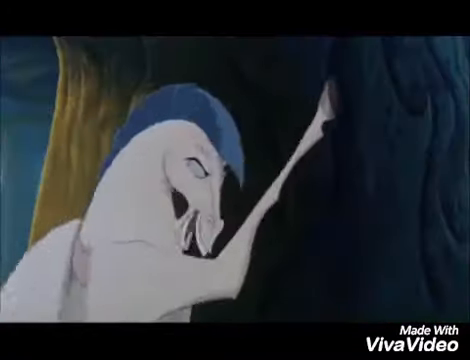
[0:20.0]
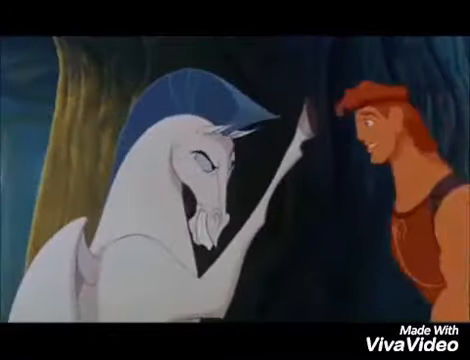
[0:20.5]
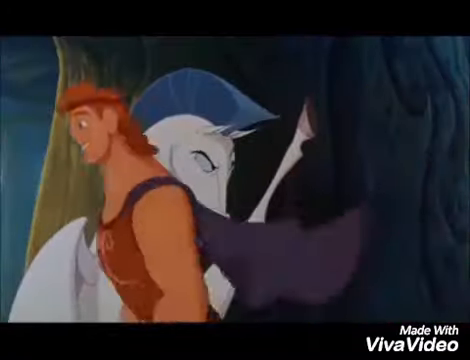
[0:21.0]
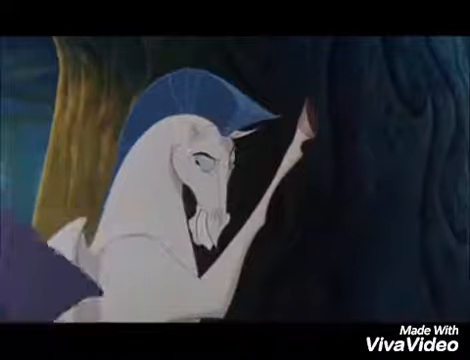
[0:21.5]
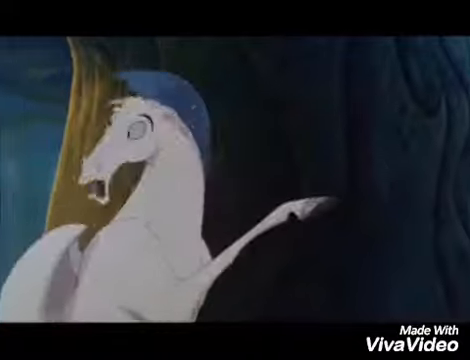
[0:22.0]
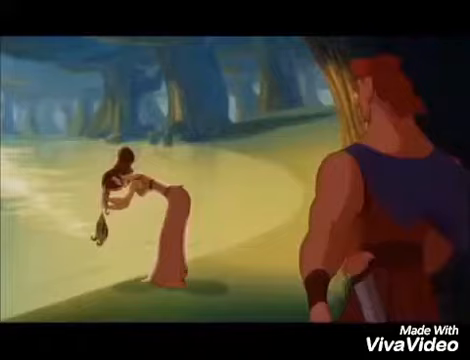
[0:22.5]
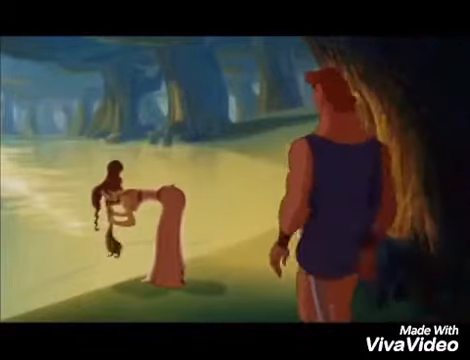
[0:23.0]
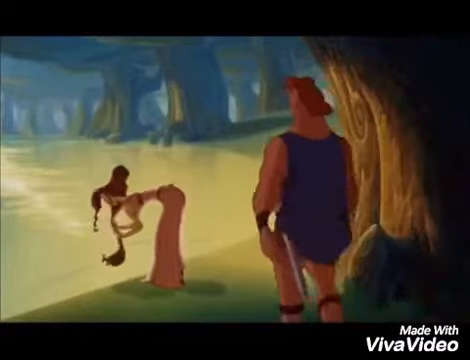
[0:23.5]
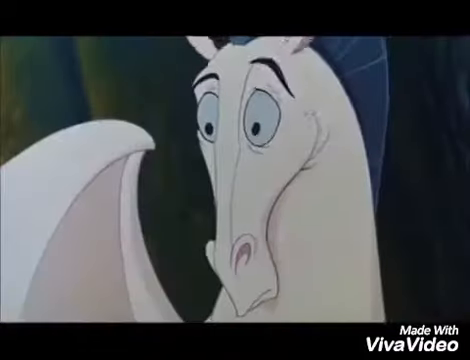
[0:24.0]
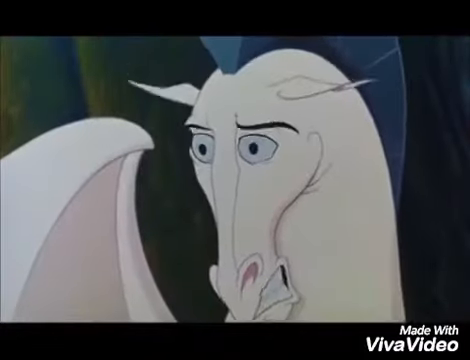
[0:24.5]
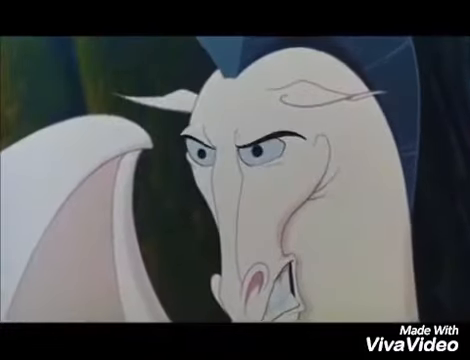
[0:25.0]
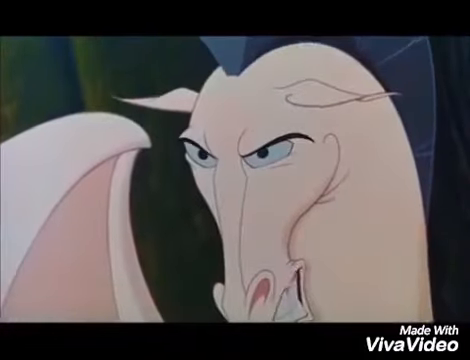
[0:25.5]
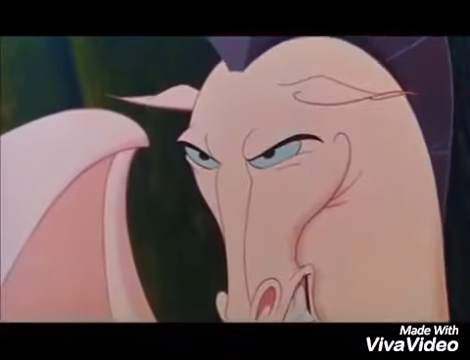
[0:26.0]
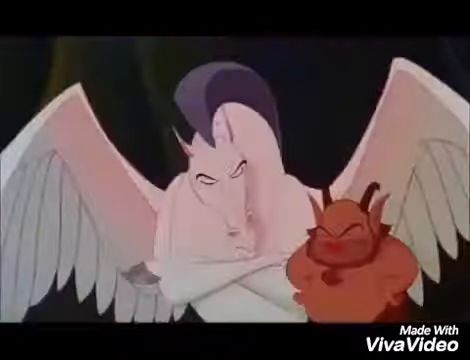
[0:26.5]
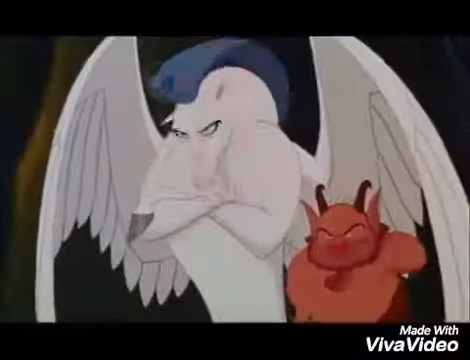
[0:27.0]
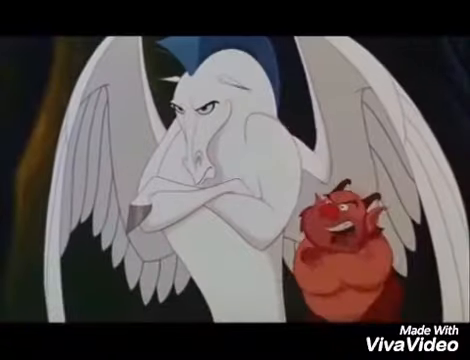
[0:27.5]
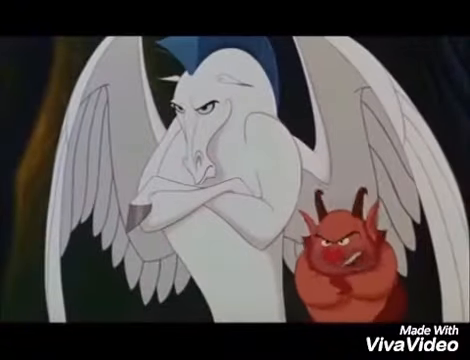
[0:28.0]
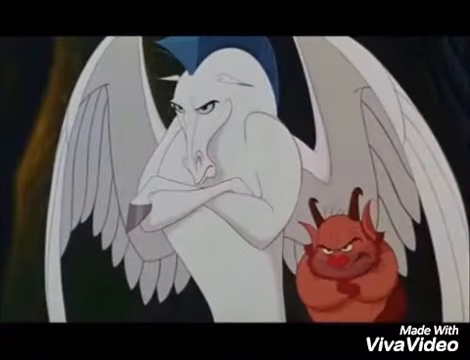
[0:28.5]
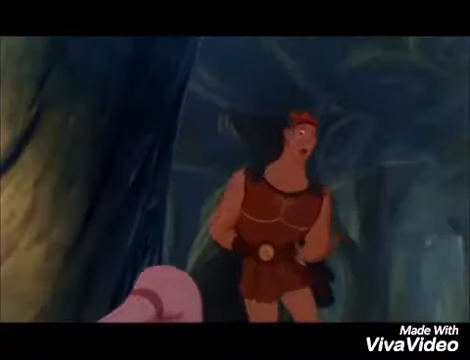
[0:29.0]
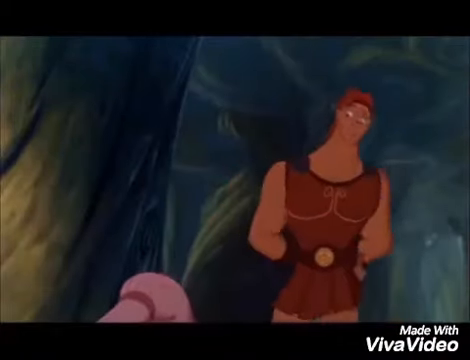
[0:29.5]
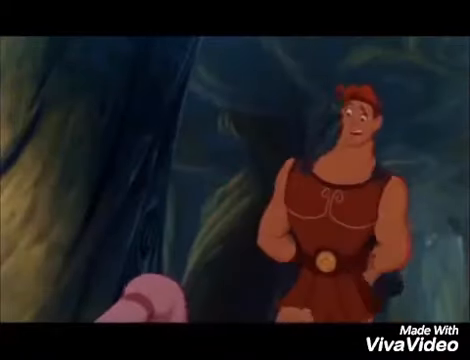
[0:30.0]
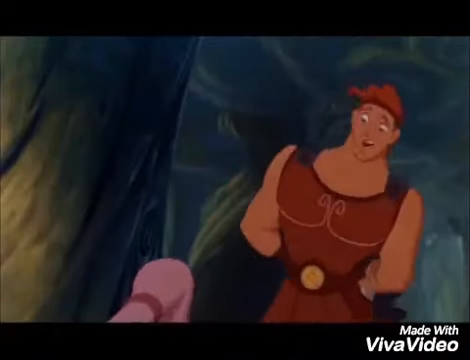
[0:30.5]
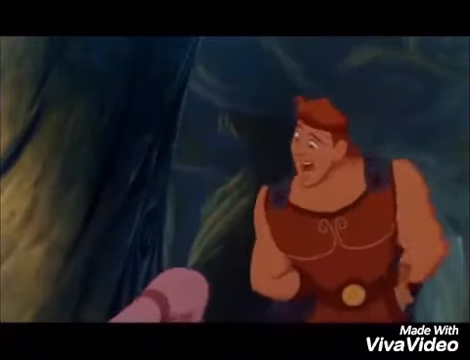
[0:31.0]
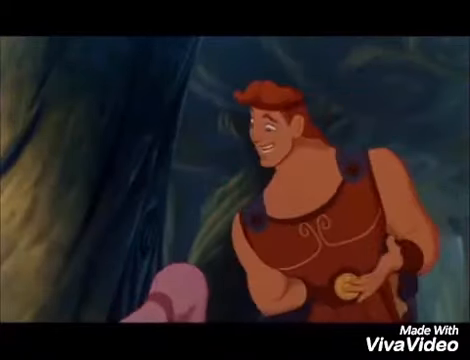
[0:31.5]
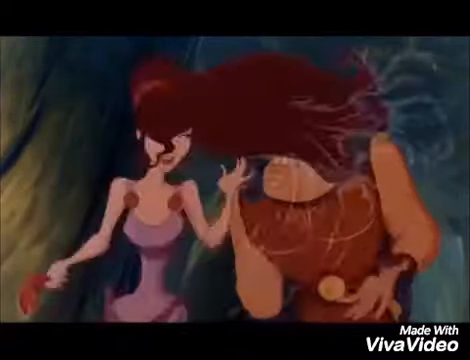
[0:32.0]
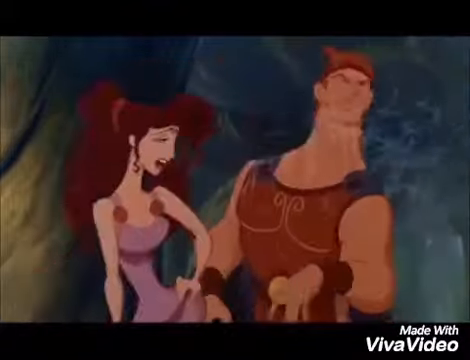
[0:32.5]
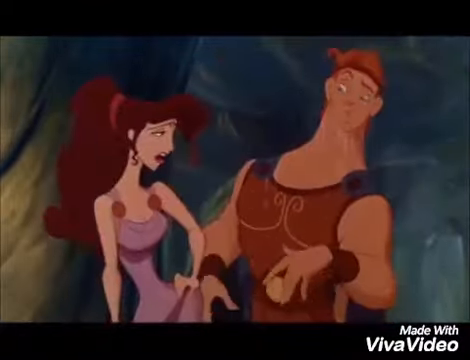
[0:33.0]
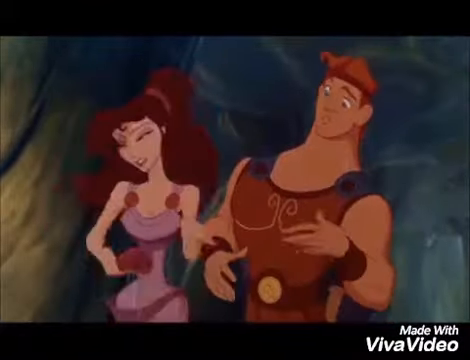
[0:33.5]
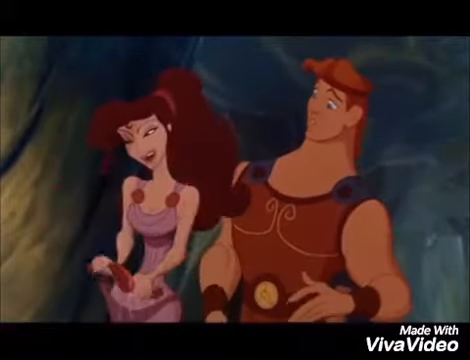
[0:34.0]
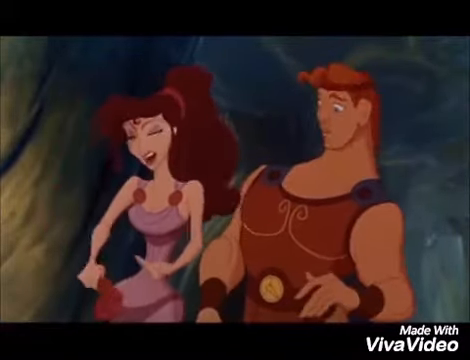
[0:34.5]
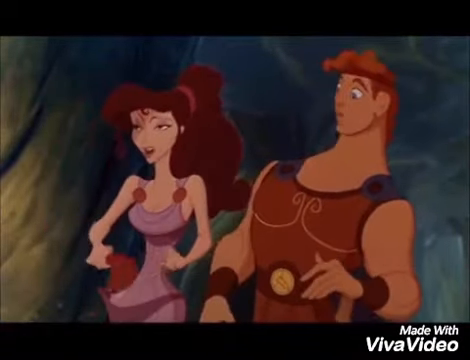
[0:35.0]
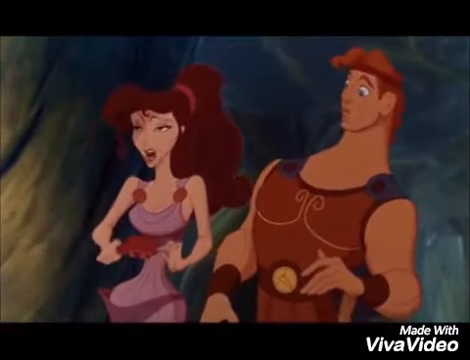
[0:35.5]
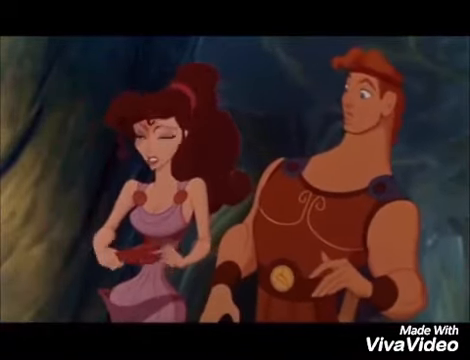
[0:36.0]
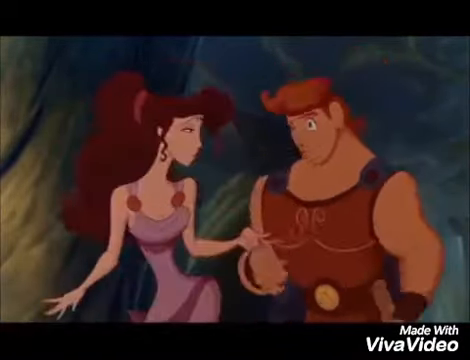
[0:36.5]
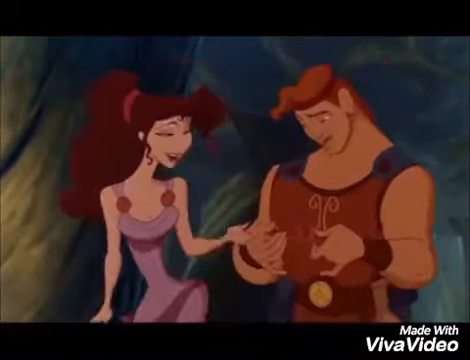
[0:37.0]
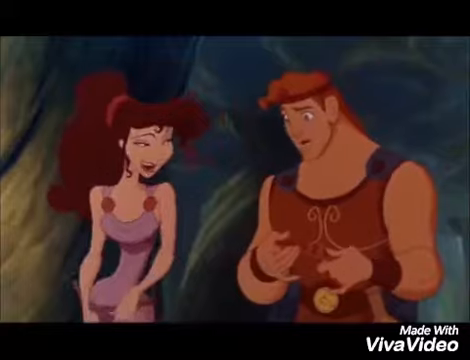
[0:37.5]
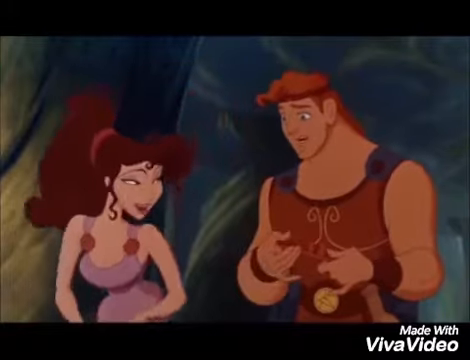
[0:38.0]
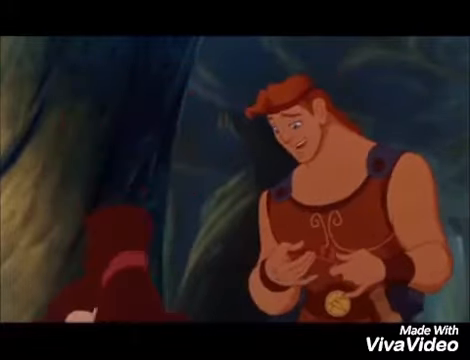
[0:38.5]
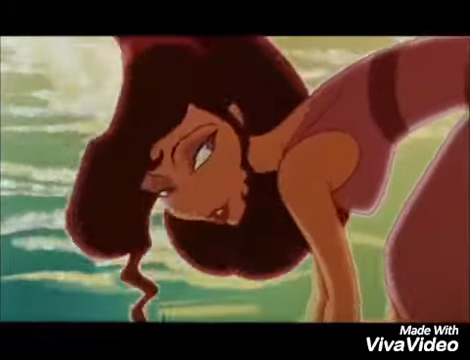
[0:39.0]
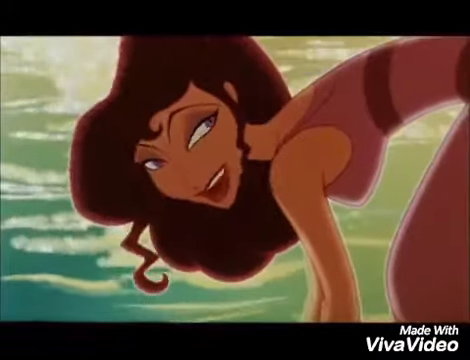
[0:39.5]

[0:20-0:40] The guy with the dark brown skin complexion approaches the beautiful lady. The horse reacts with something like shock, which turns to anger, and its color changes from white to brown. The horse has a mohawk hairstyle on its head and wings, and wears a very furious expression. The little creature is right beside the horse, and they both stand there looking on, kind of furious, as the guy approaches the girl. The guy talks to the girl; she stands up from bending down and hits him with her wet hair from washing it. They have a conversation, and something is handed over to the guy.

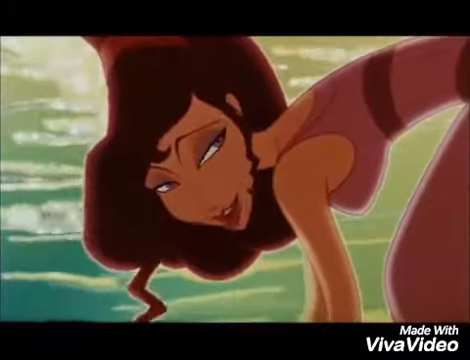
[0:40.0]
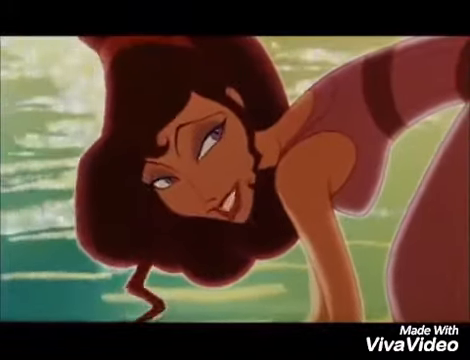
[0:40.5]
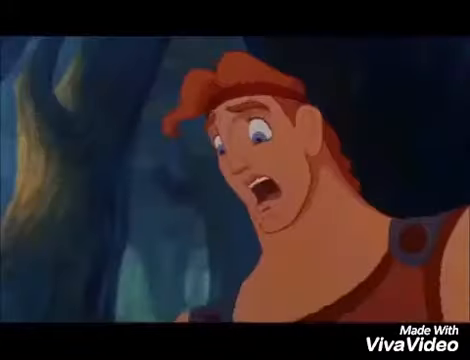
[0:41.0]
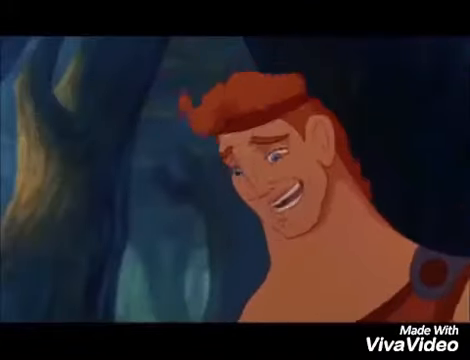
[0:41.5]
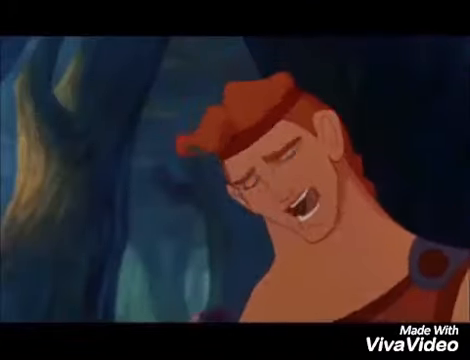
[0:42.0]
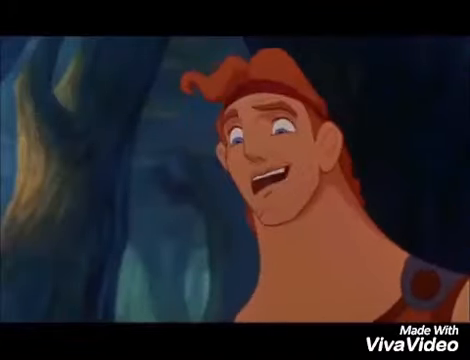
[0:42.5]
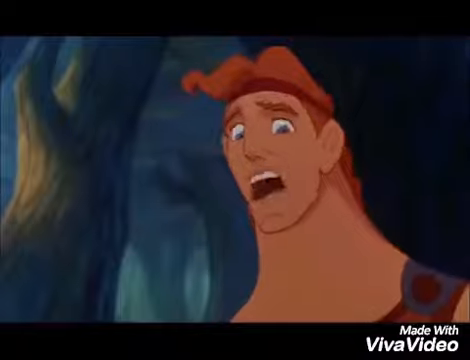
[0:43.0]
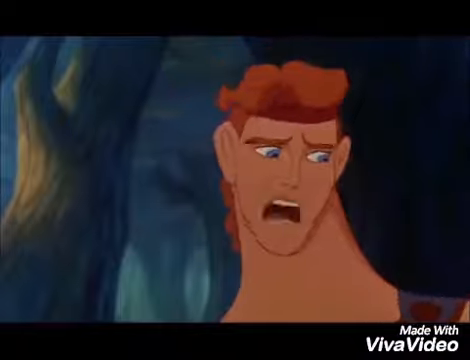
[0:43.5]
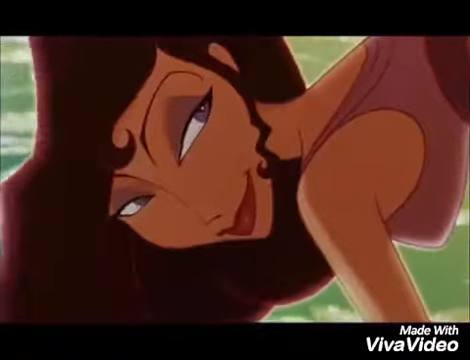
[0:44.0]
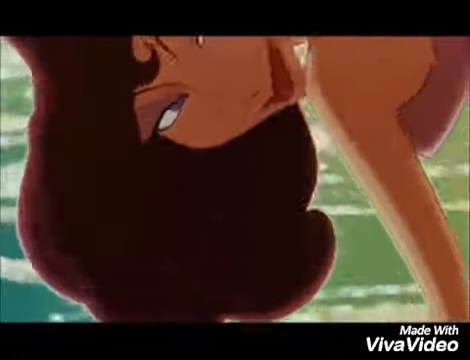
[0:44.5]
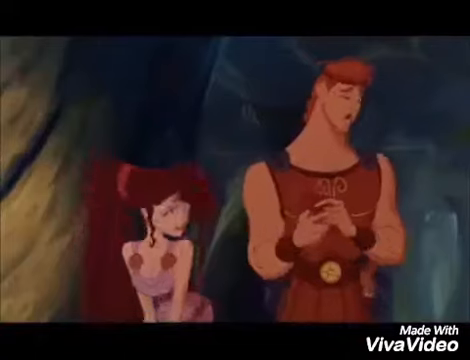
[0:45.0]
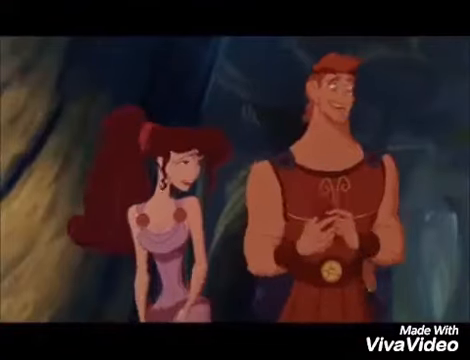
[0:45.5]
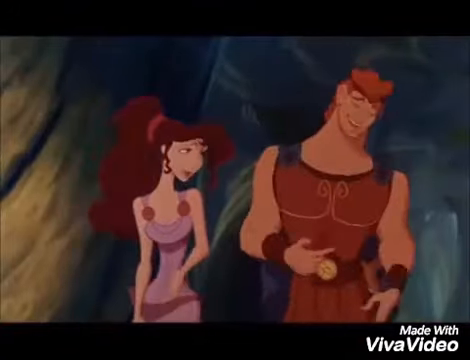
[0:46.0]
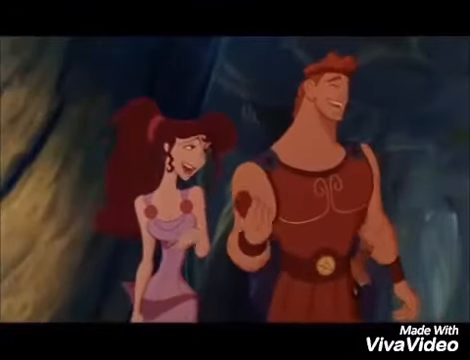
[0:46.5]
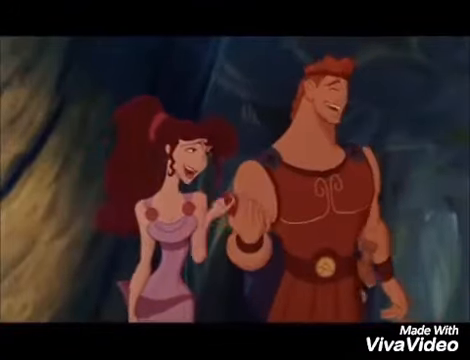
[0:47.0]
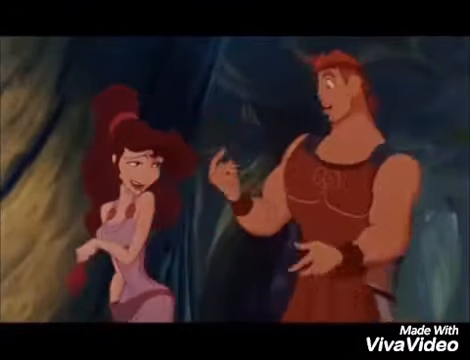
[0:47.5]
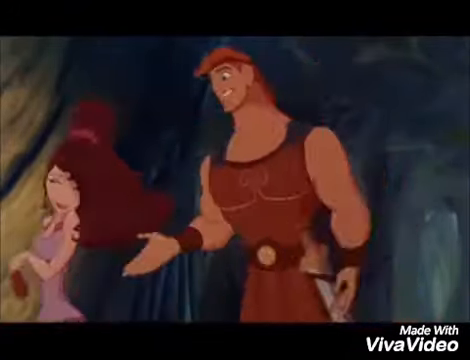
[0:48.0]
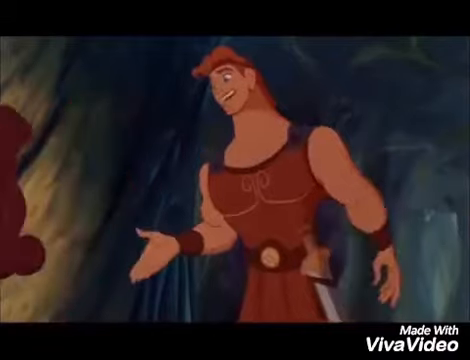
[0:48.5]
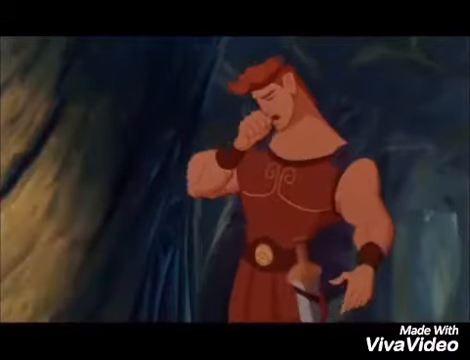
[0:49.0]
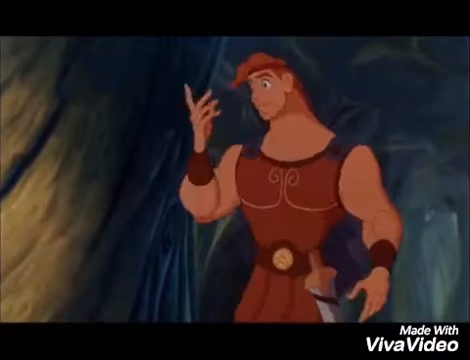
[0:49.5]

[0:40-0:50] The guy with the dark brown skin complexion, a sword beside him, has a very good conversation with the girl. He is kind of shy and hands something over to her. The girl smiles while talking to him. The guy seems shocked about something, and the item is handed back to the guy. He touches his jaw, maybe thinking about something, appears to be shaking and surprised at what is happening, and touches his jaw once more.